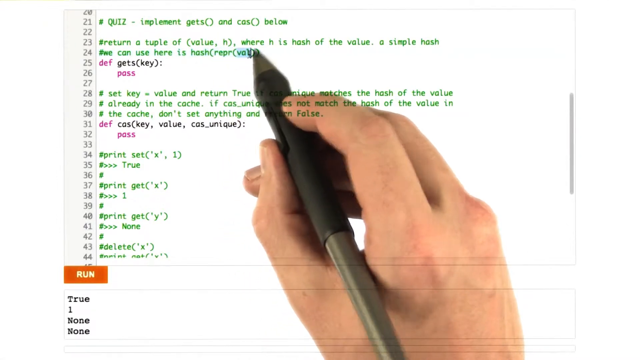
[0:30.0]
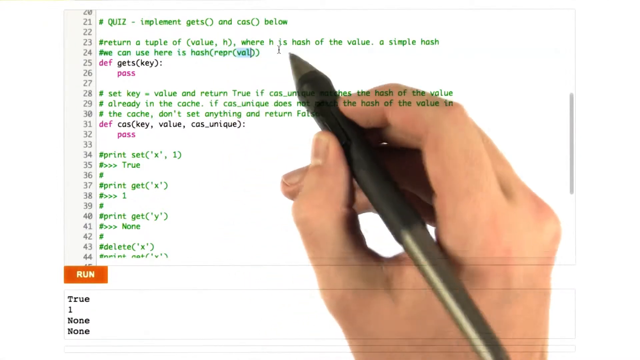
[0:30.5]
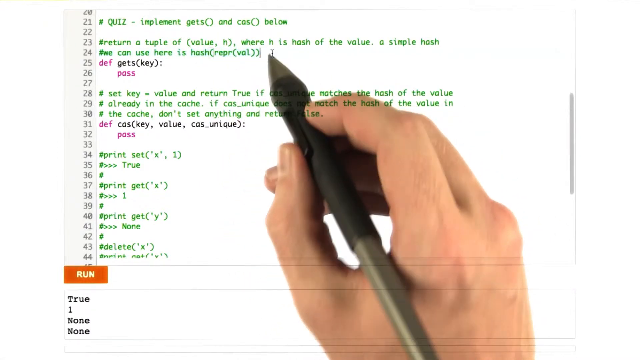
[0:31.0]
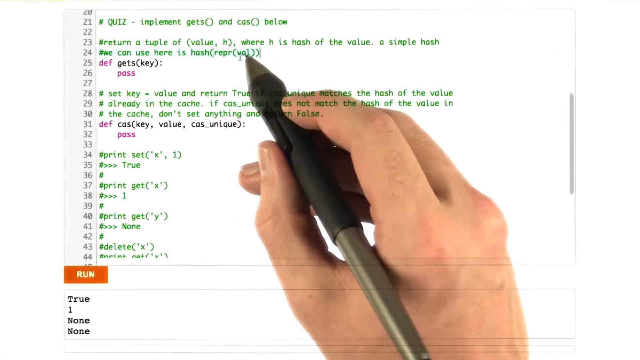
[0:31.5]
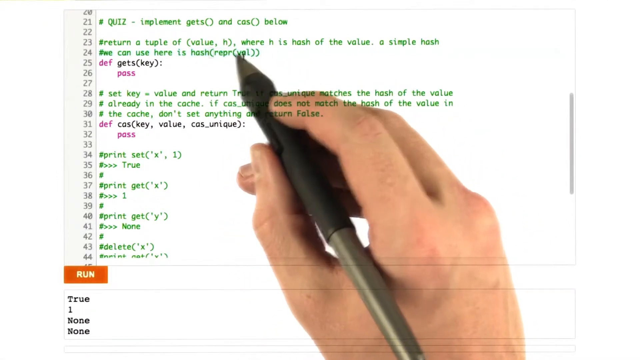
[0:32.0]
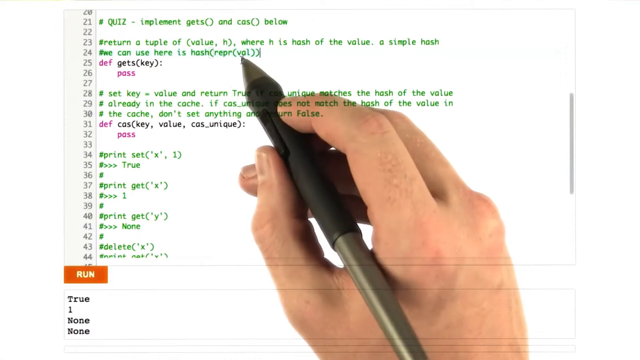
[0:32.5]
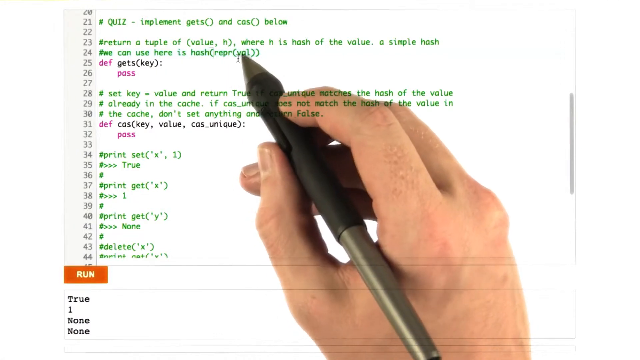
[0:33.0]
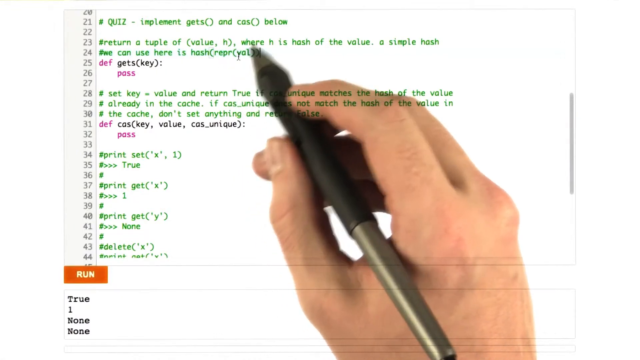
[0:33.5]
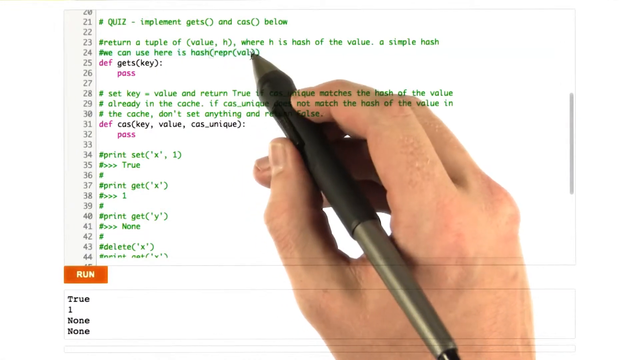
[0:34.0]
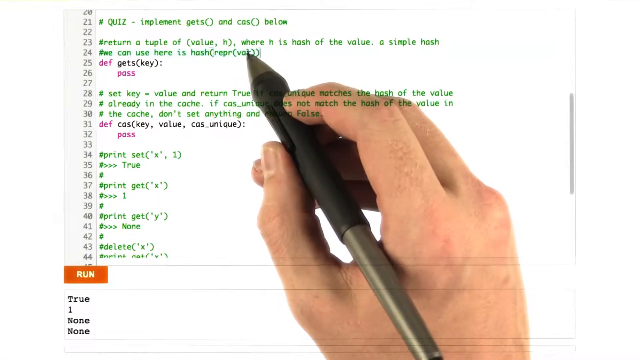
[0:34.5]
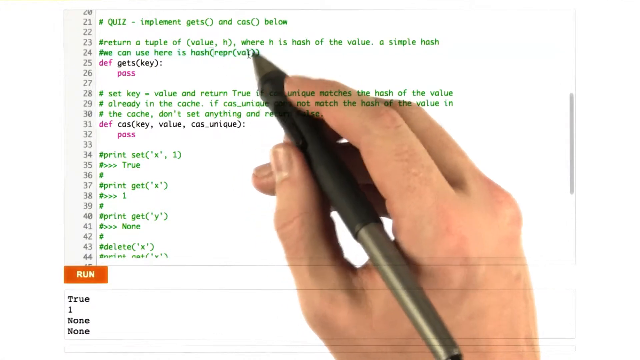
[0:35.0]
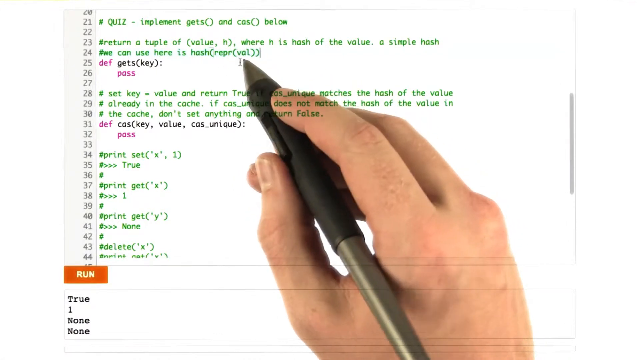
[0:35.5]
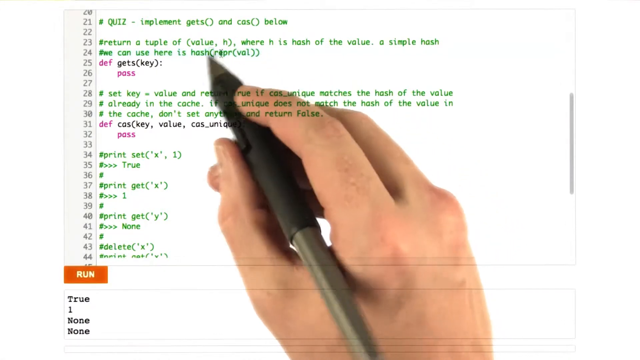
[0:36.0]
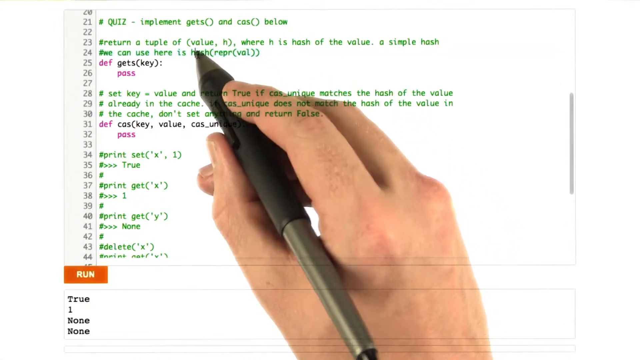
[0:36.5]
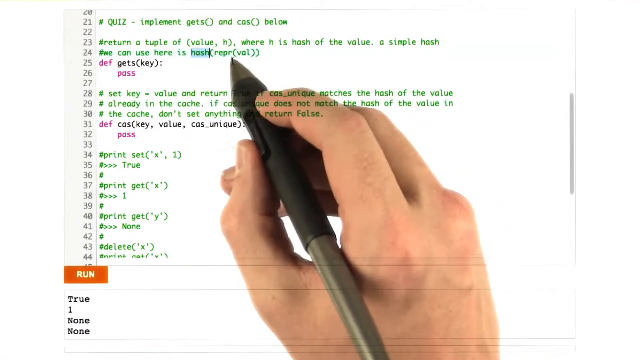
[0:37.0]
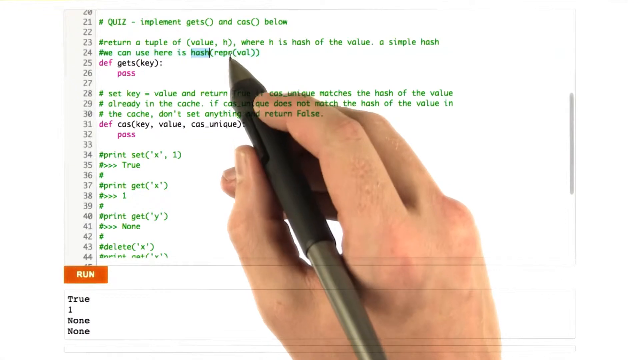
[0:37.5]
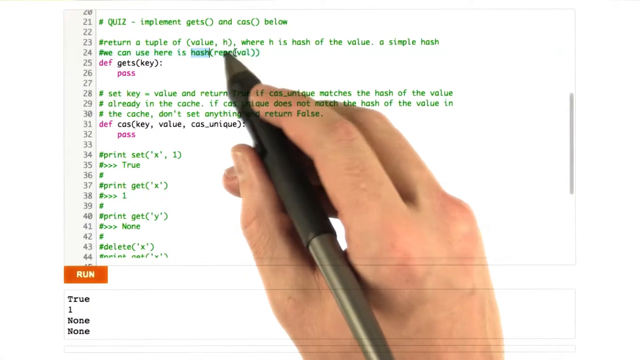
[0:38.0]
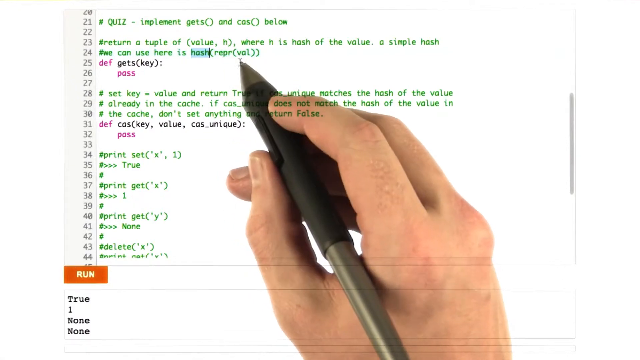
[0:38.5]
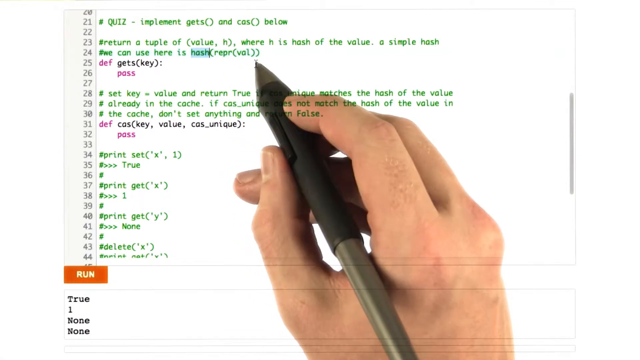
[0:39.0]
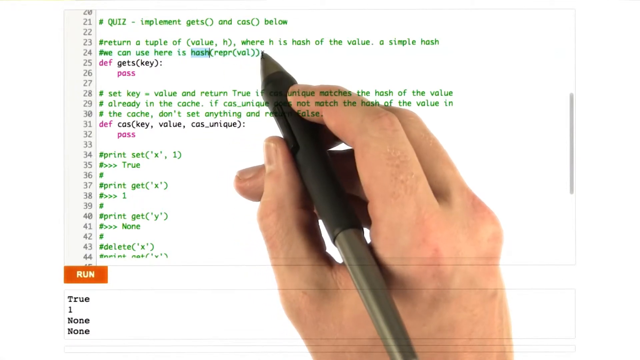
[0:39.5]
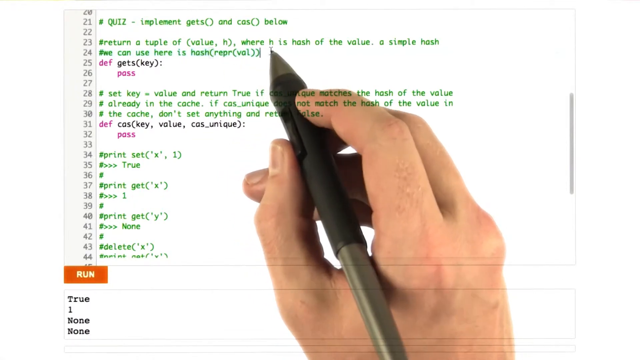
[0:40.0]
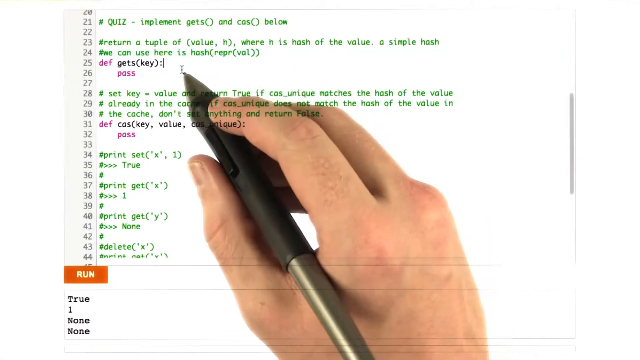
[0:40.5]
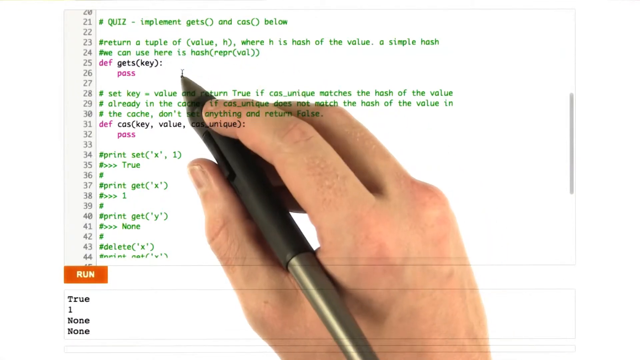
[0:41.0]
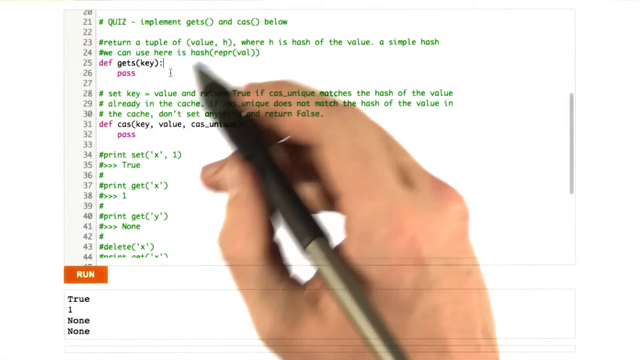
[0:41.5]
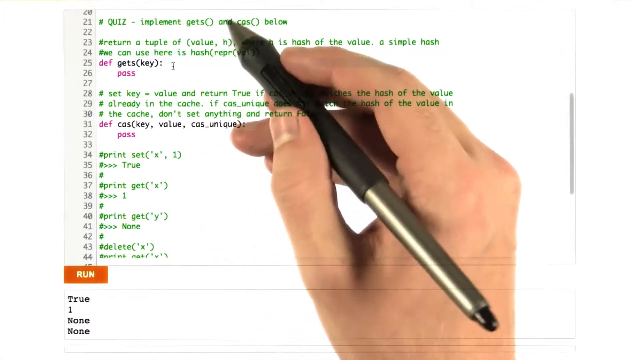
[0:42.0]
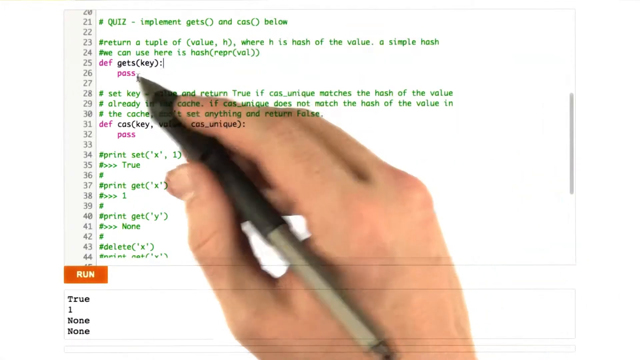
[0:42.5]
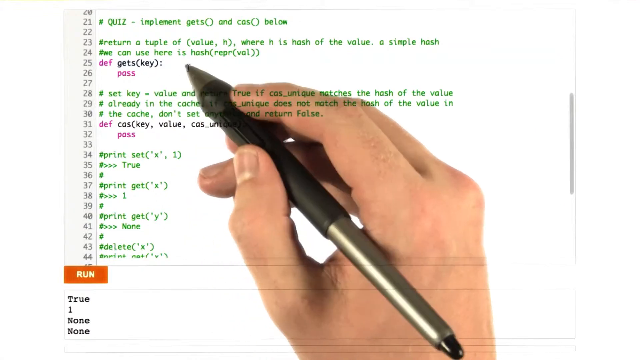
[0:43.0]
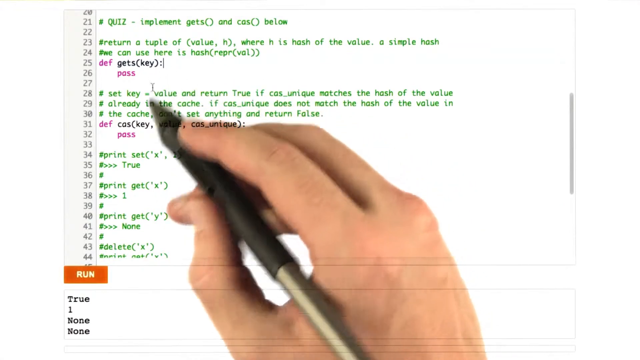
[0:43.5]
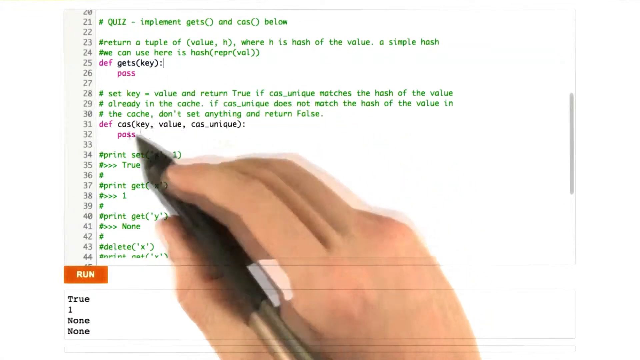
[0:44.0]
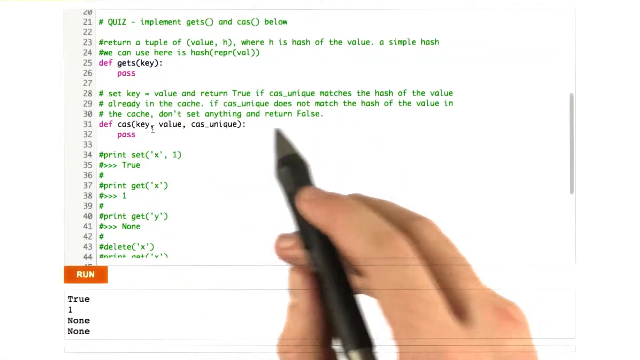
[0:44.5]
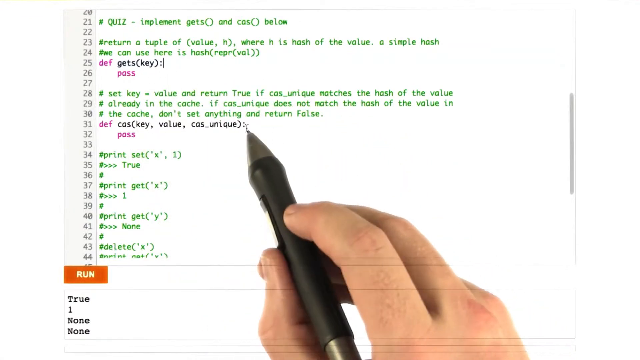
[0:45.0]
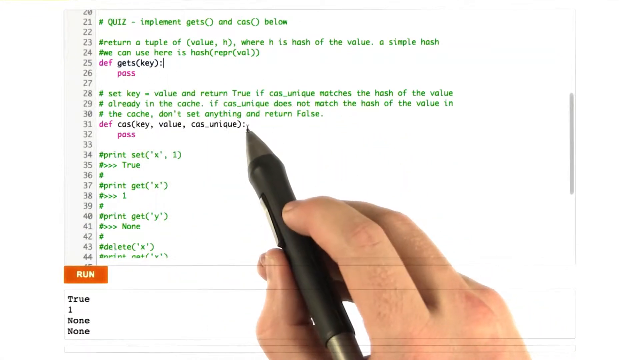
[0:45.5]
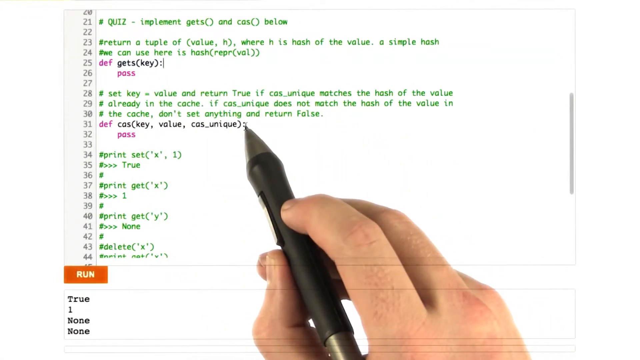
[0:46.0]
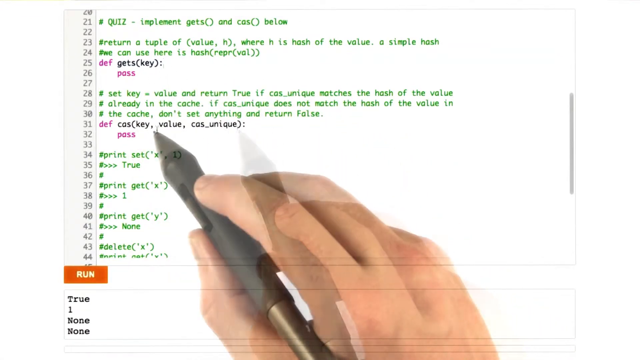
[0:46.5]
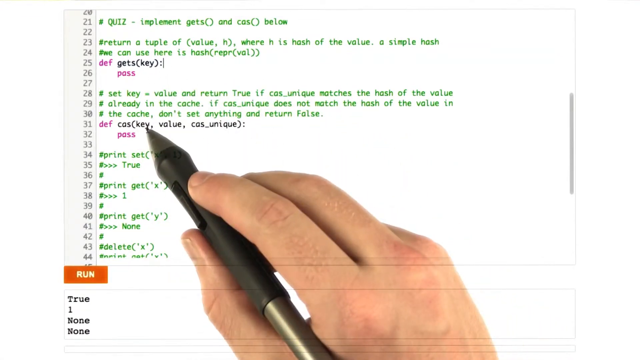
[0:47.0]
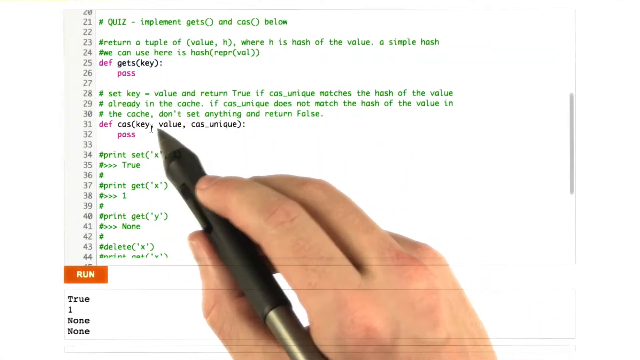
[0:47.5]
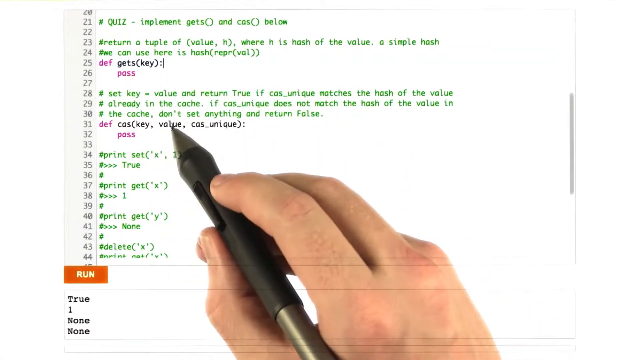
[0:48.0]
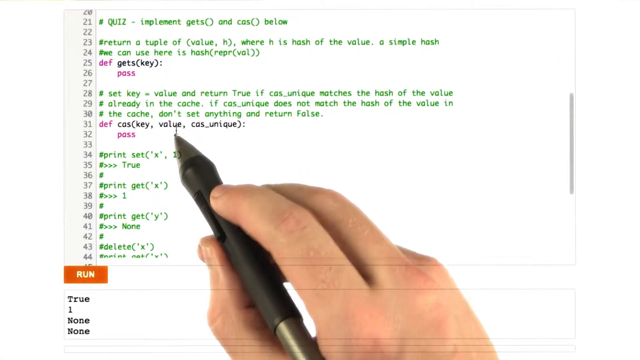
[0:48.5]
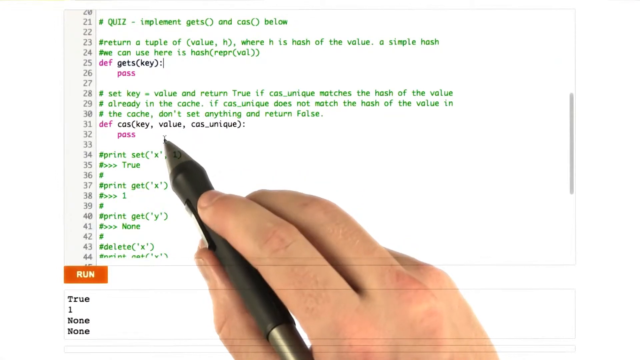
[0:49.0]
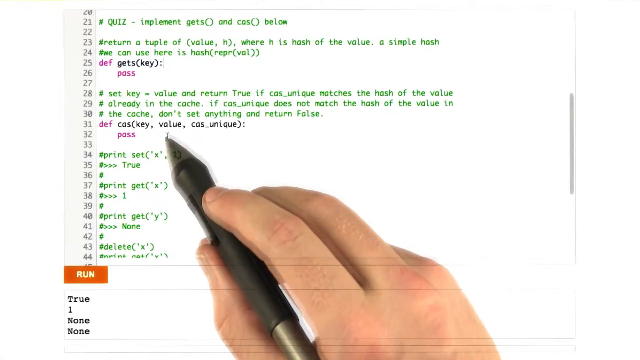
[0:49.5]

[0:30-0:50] The person immediately circles the word "where" on line 23, holding the pen between the thumb and forefinger of the right hand. The pen moves down a bit and touches the words on line 24, which are written in green: "can", "use", "hear", "is", "harsh". The person circles "Val" and highlights "harsh" in blue. They make a motion as if drawing a line under "harsh" and the letters "R-E-P-R", but no line actually appears on the screen. The hand keeps moving from place to place in a sort of erratic manner, from the top of the screen toward the lower left side, then toward the lower right side and back up, though even when heading to the lower corners it stays basically in the middle to upper portion of the screen.